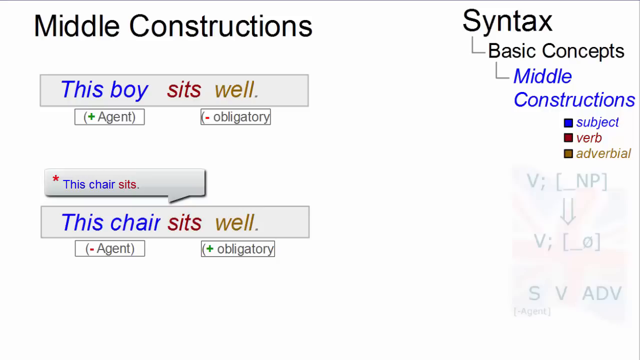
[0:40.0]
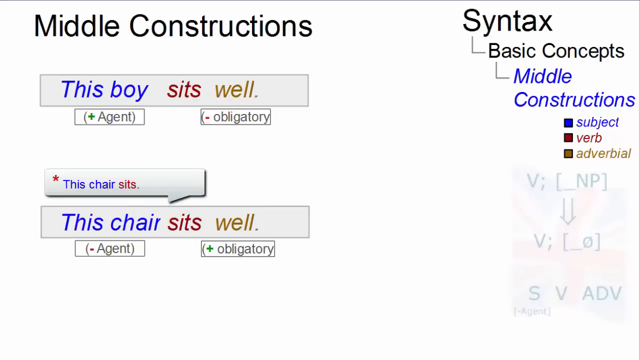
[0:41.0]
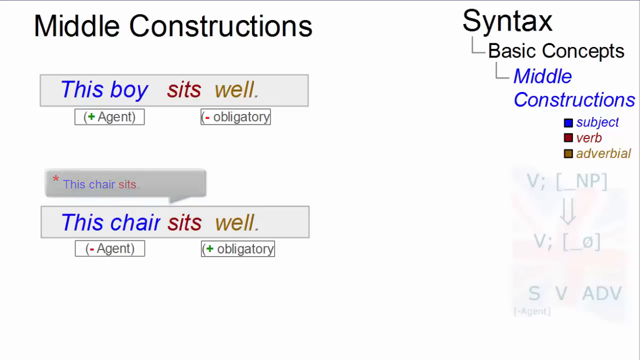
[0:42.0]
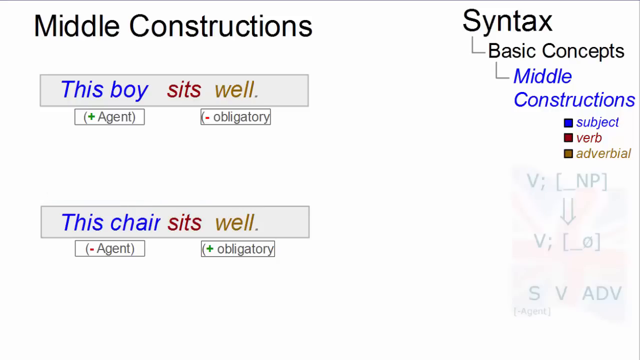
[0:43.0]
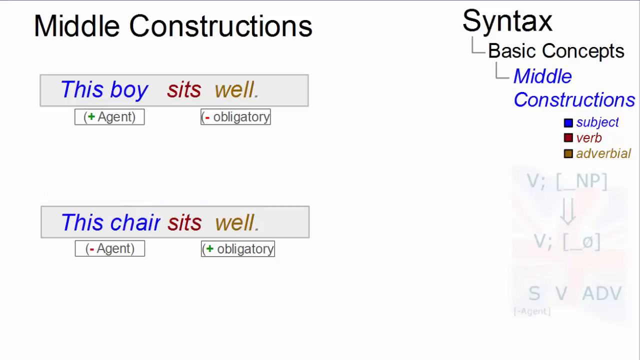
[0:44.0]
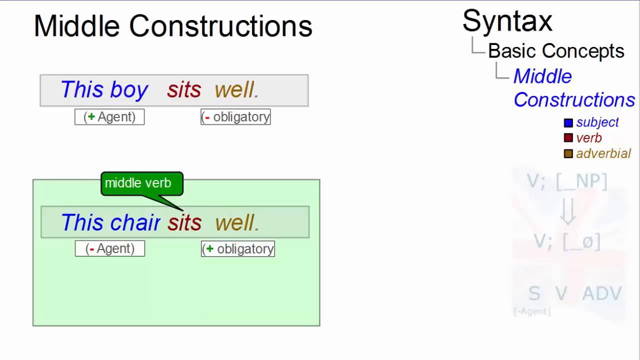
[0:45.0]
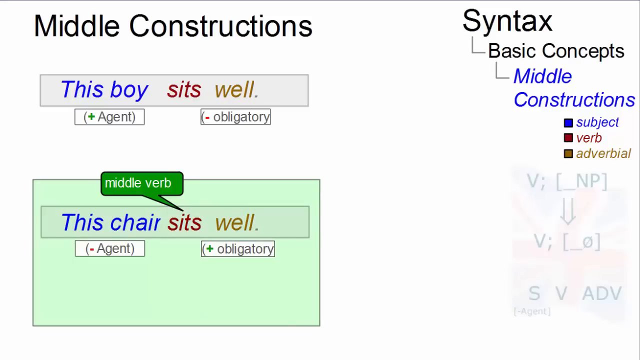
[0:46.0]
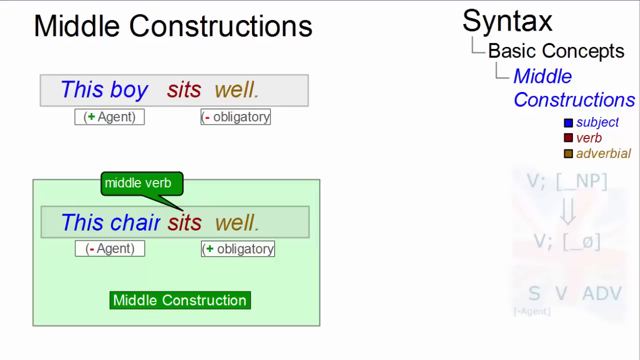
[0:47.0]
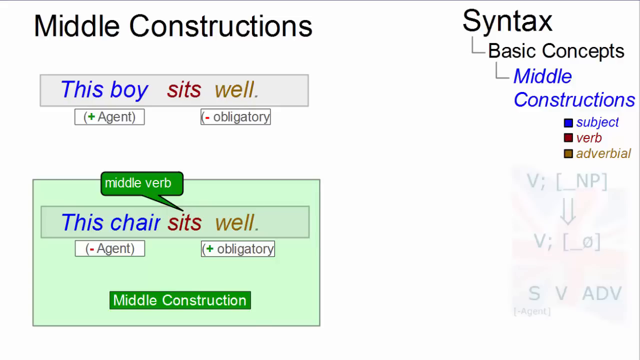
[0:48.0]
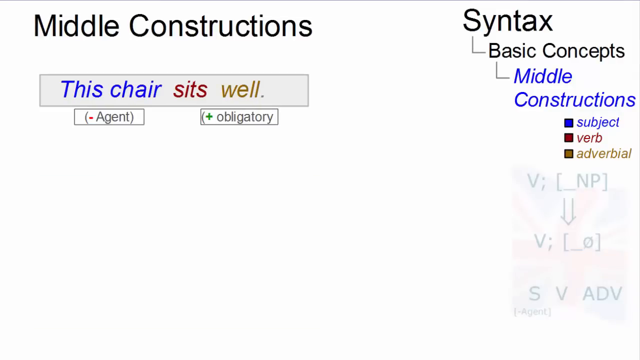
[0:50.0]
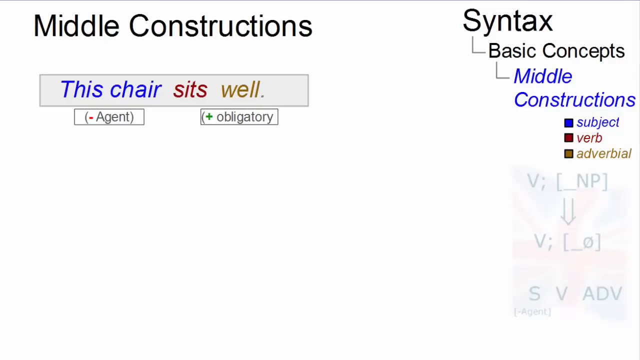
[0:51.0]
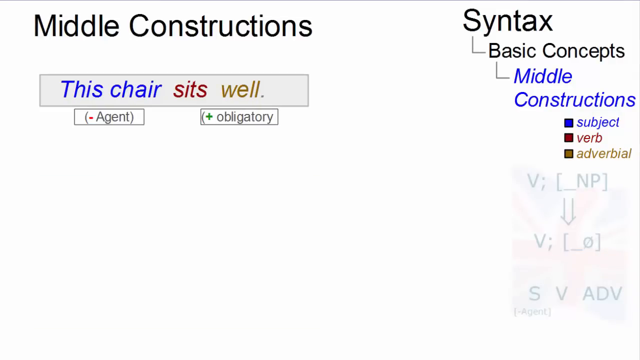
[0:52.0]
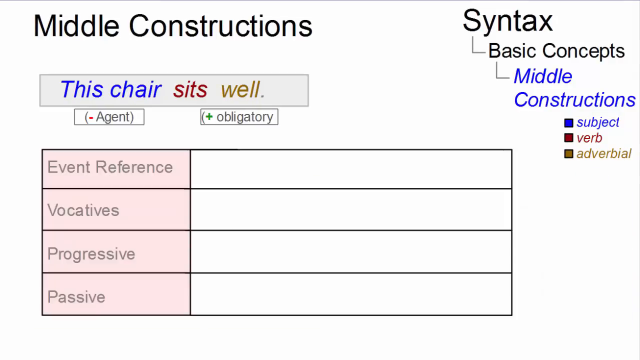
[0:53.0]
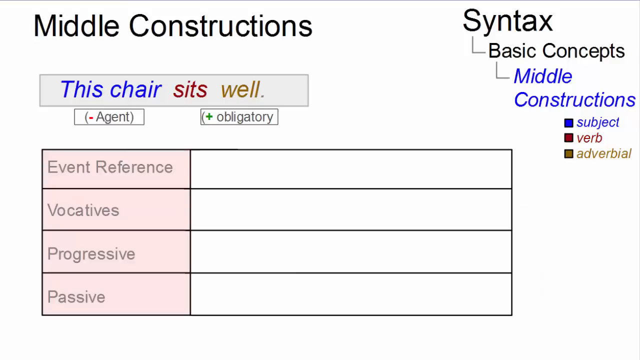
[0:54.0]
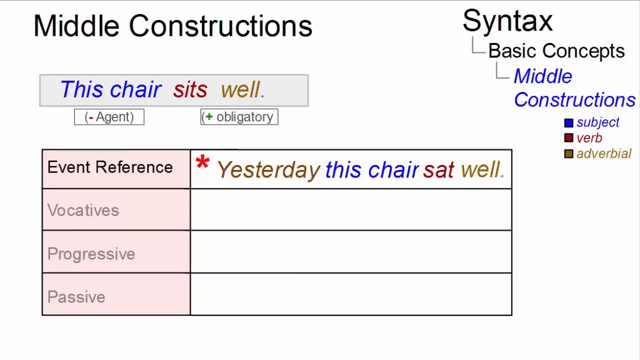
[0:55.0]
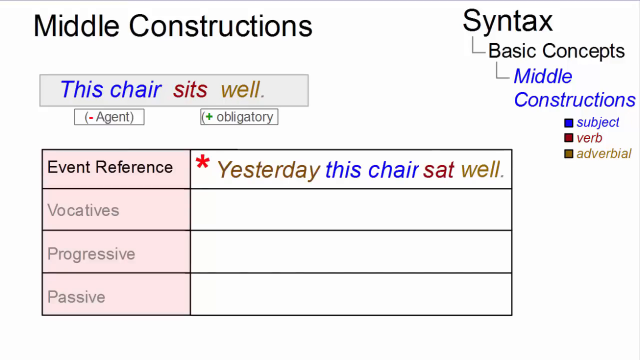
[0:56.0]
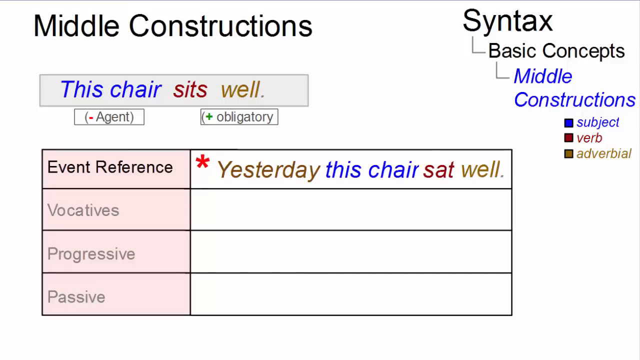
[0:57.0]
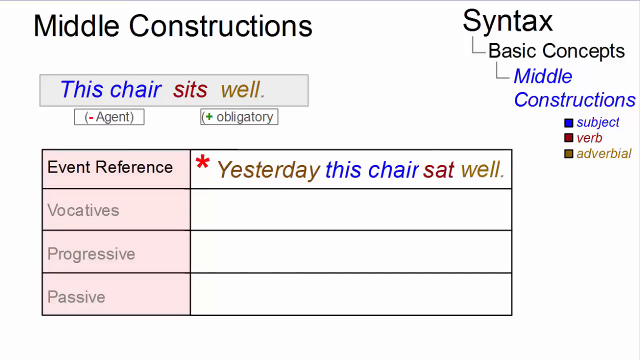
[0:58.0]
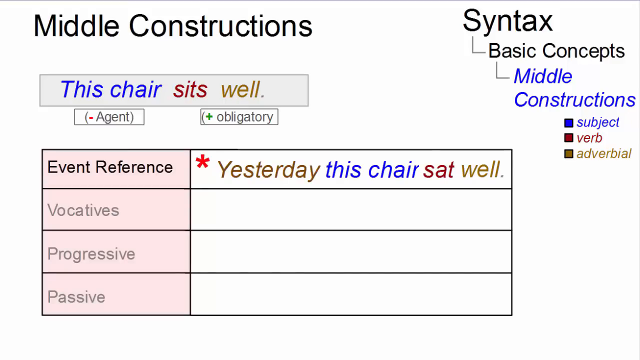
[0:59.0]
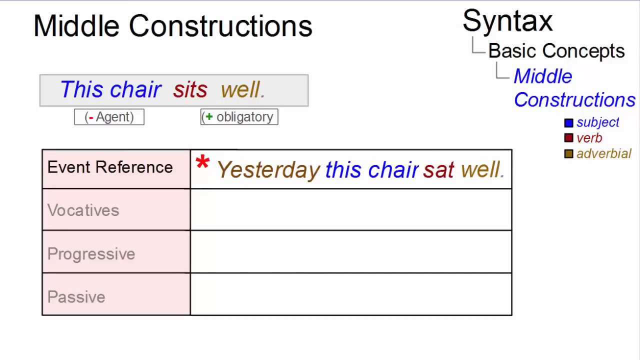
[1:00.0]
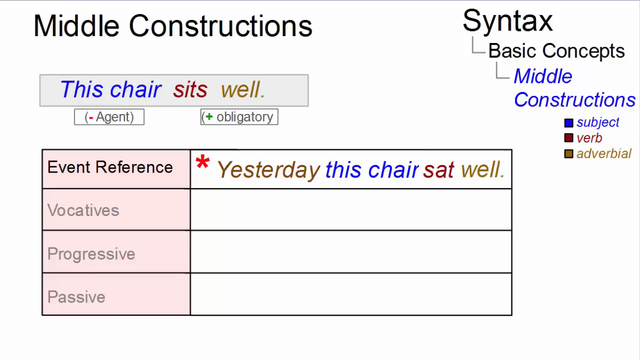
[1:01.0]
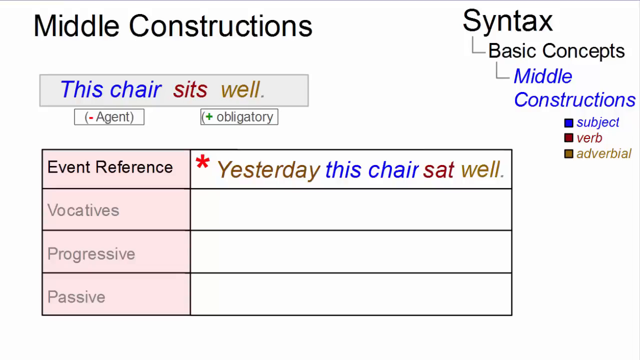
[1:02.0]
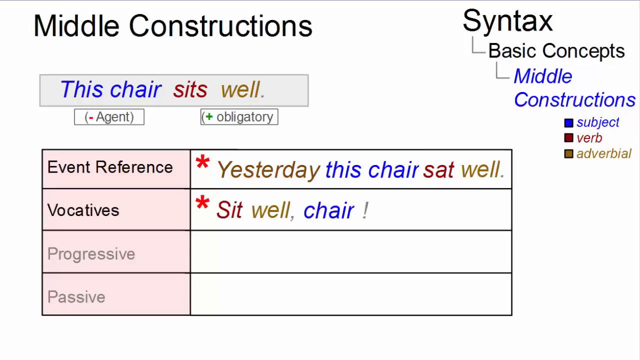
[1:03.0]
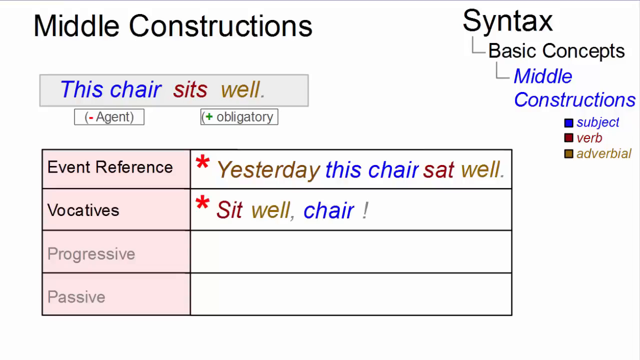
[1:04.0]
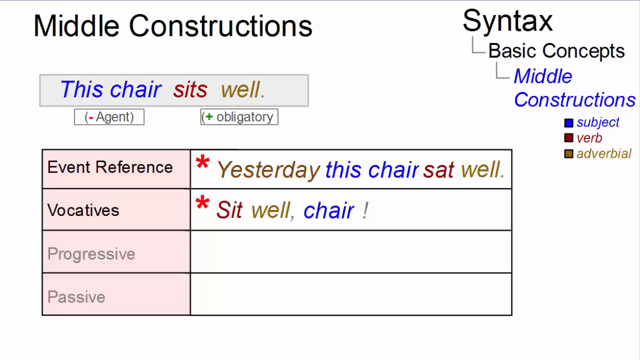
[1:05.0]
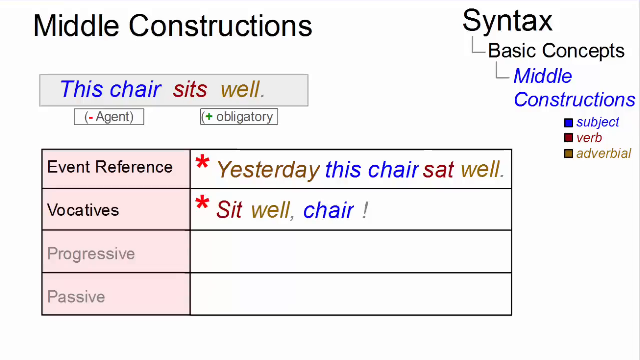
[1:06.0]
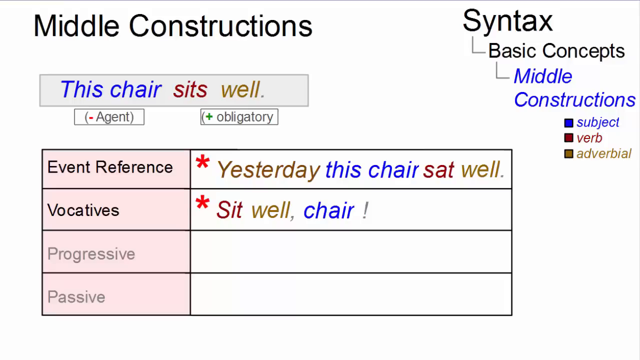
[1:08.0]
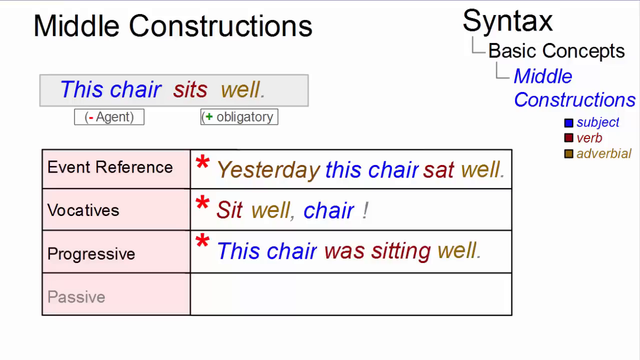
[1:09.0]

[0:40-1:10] The middle constructions page shows two examples, "this boy sits well" and "this chair sits well". The subject is in blue, the verb in red and the adverbial in a brown-orange color. "This boy sits well" is marked with plus for agent and minus for obligatory, while "this chair sits well" has minus agent and plus obligatory. Later, "this chair sits well" is put into a green box that states that the middle verb is "sits". Then "middle construction" appears at the bottom on a green background. The video moves to a middle constructions page with the sentence "this chair sits well" and a table with the headings event reference, evocative, progressive and passive. Under event reference is "yesterday this chair sat well", under evocative is "sit well chair", and under progressive is "this chair is sitting well".